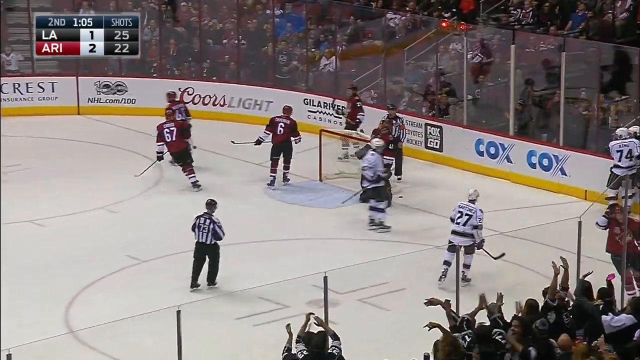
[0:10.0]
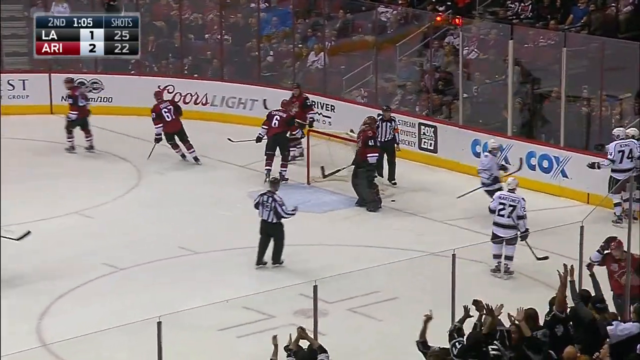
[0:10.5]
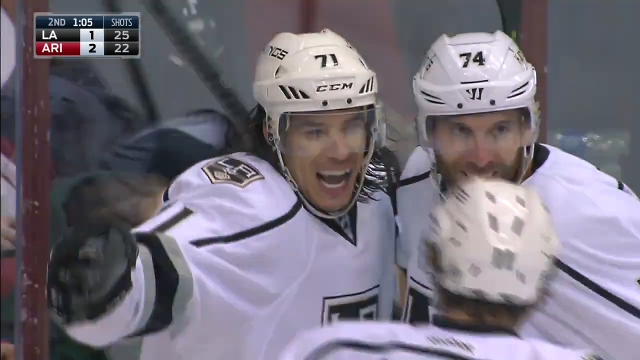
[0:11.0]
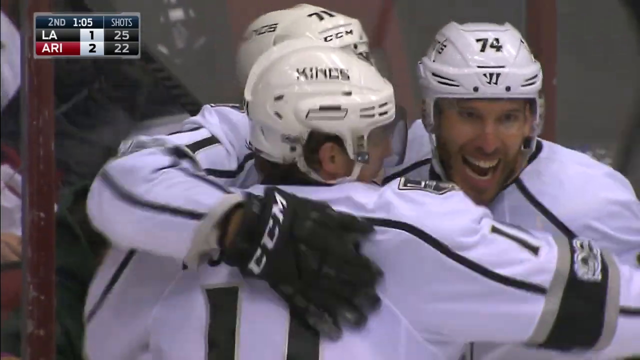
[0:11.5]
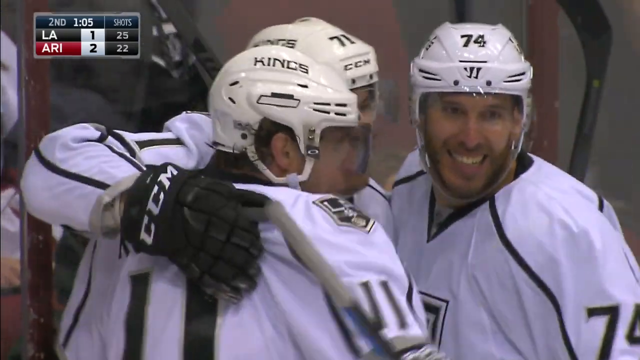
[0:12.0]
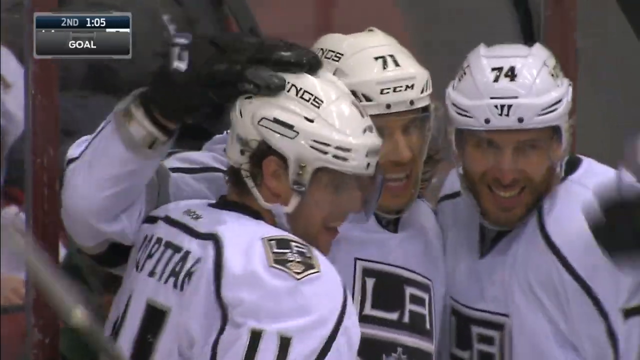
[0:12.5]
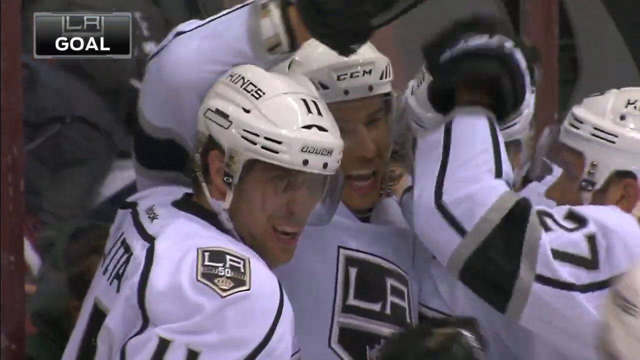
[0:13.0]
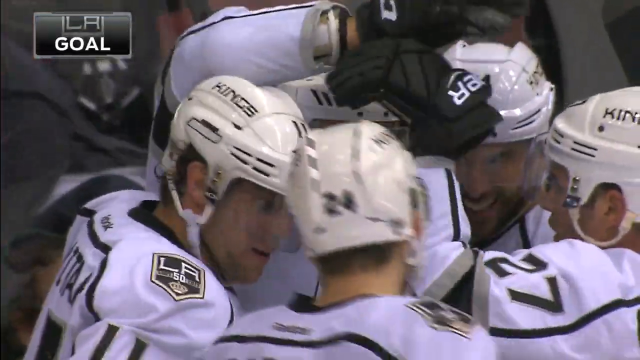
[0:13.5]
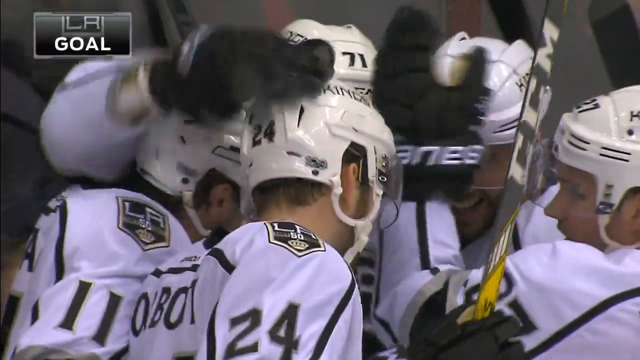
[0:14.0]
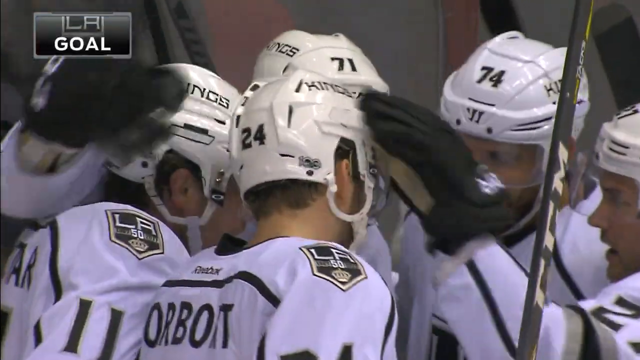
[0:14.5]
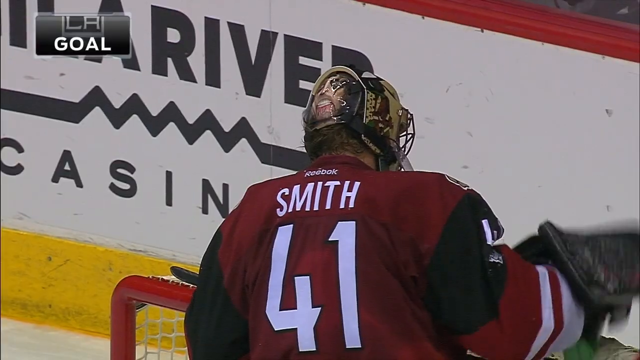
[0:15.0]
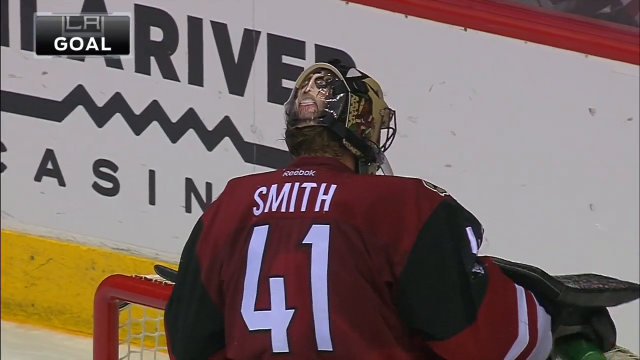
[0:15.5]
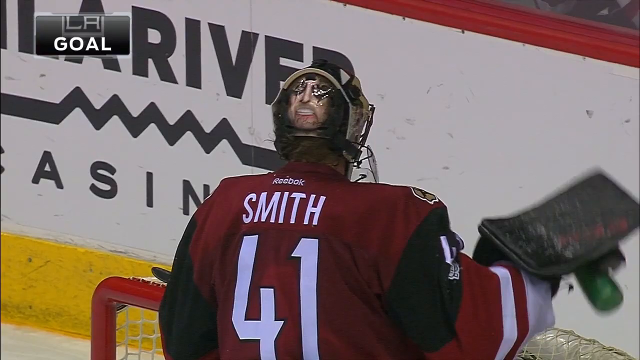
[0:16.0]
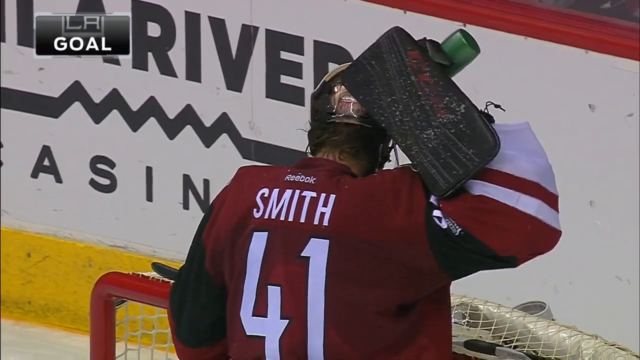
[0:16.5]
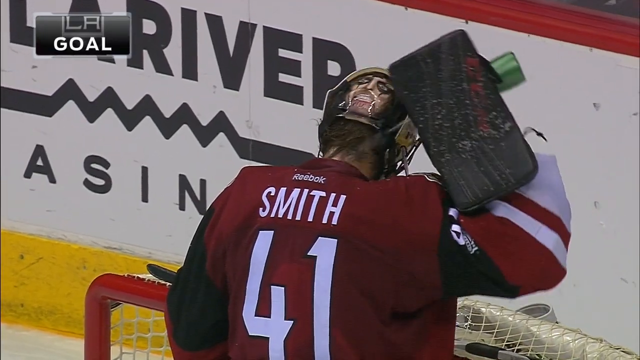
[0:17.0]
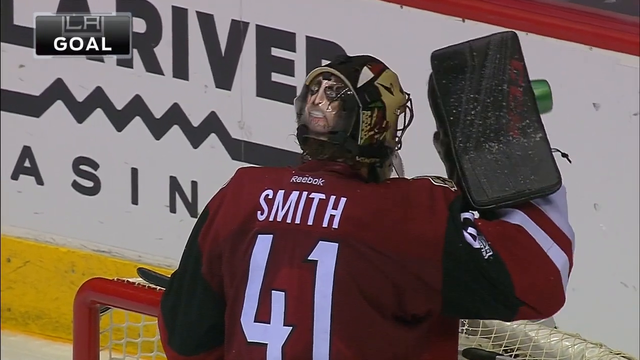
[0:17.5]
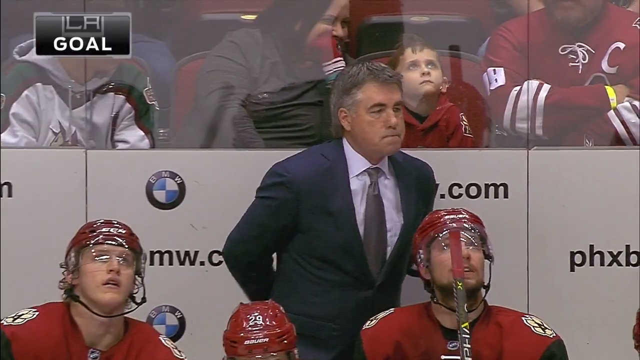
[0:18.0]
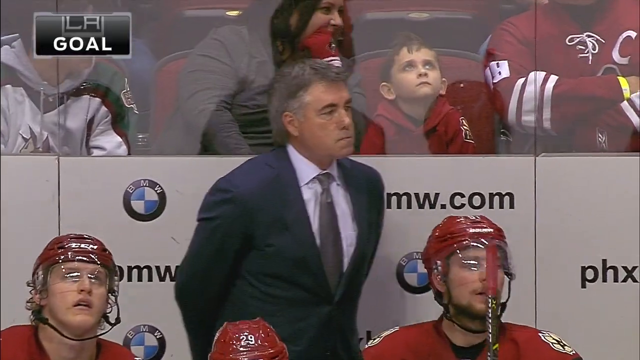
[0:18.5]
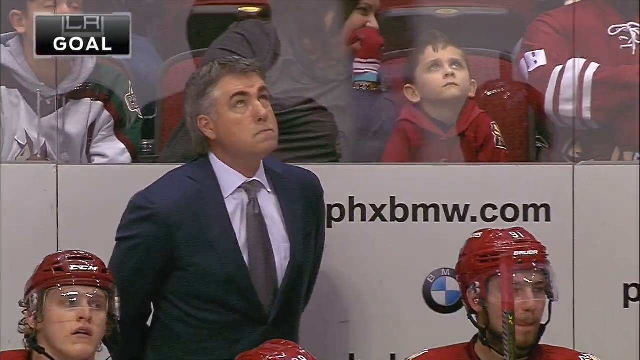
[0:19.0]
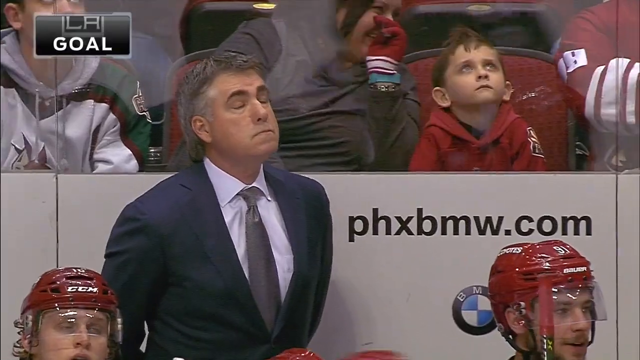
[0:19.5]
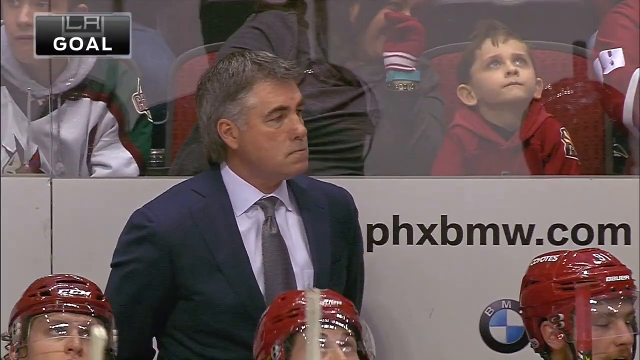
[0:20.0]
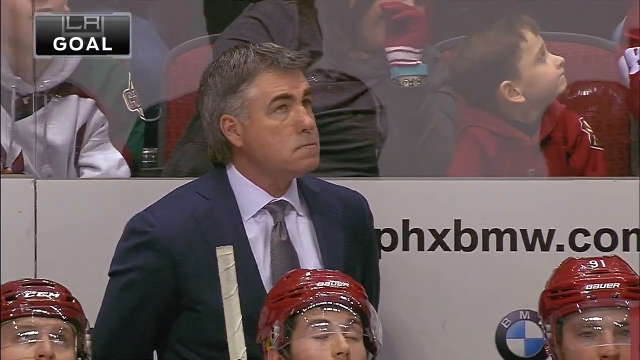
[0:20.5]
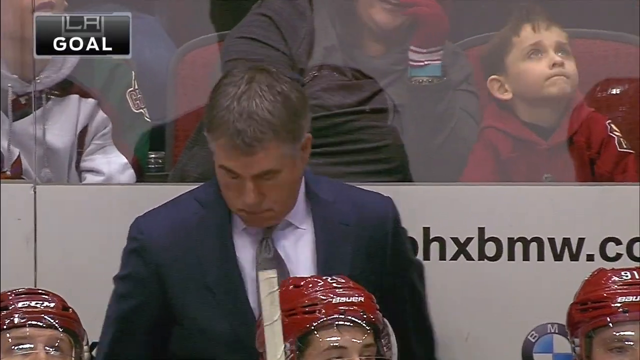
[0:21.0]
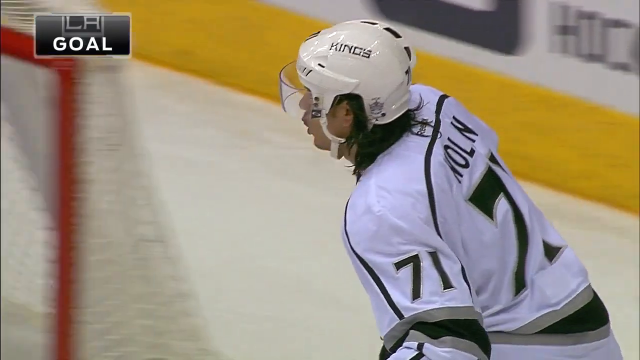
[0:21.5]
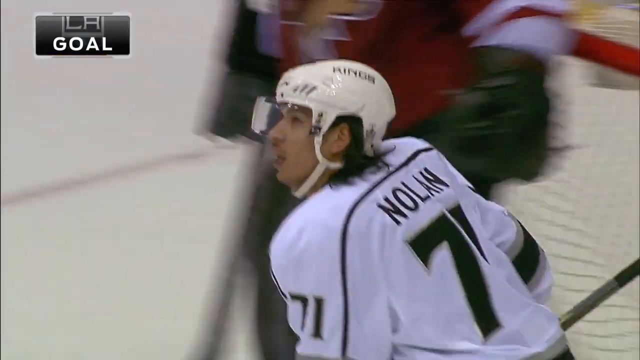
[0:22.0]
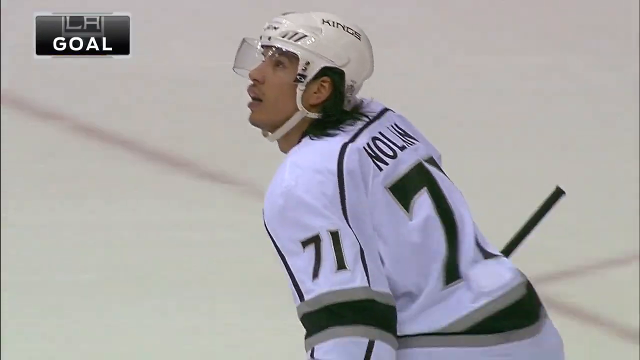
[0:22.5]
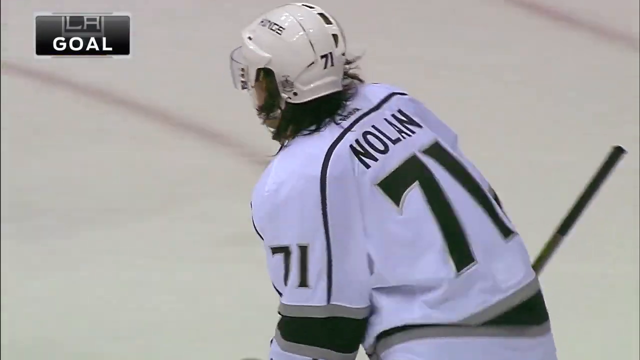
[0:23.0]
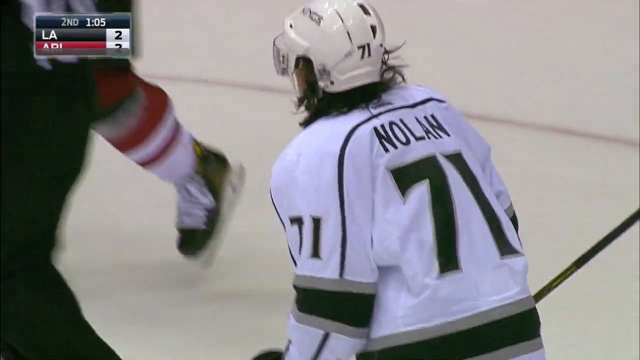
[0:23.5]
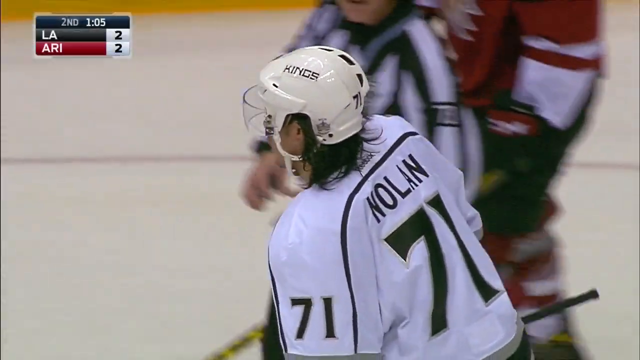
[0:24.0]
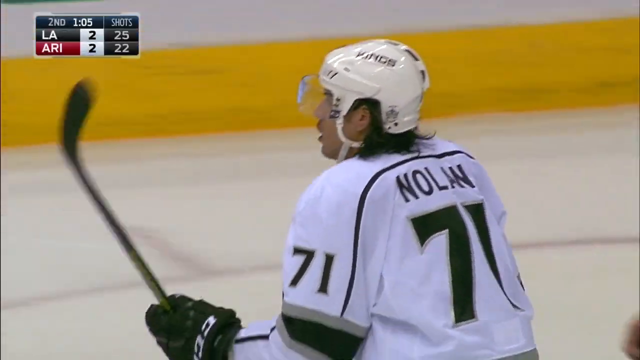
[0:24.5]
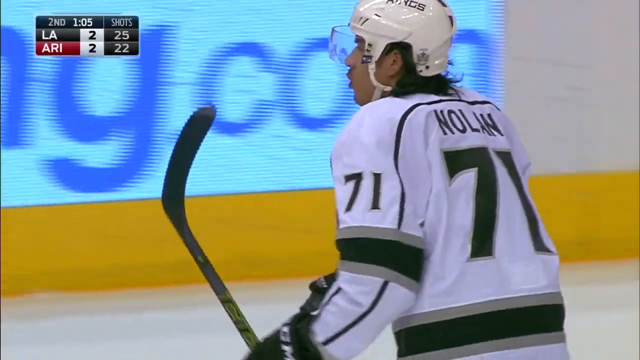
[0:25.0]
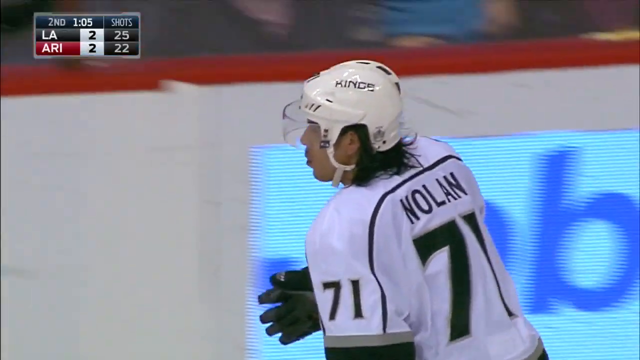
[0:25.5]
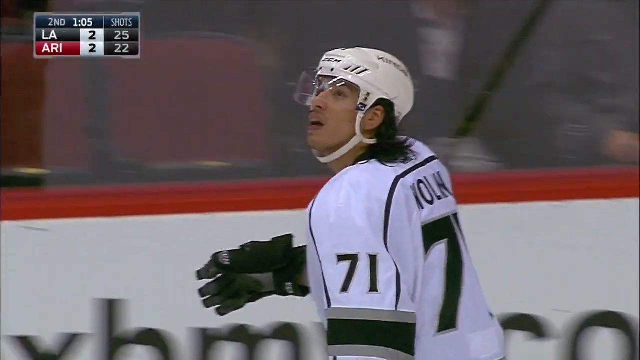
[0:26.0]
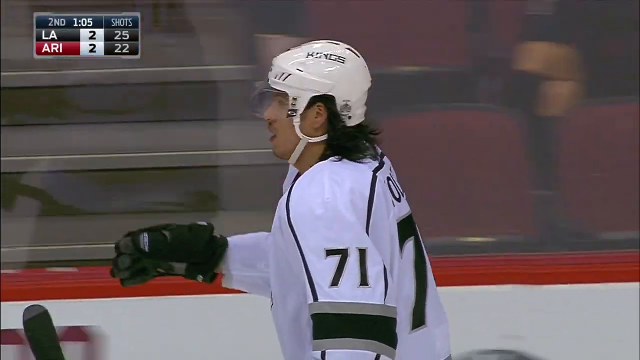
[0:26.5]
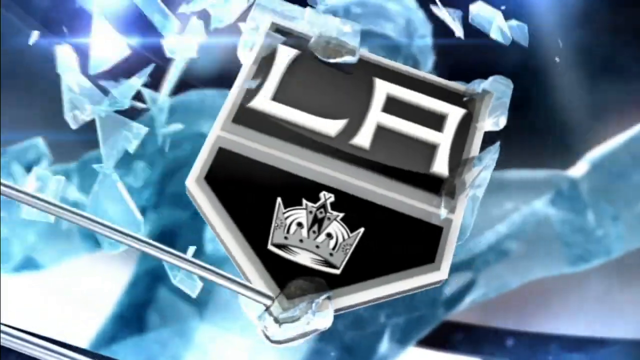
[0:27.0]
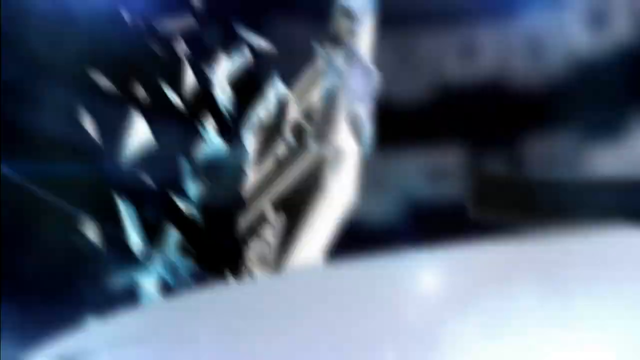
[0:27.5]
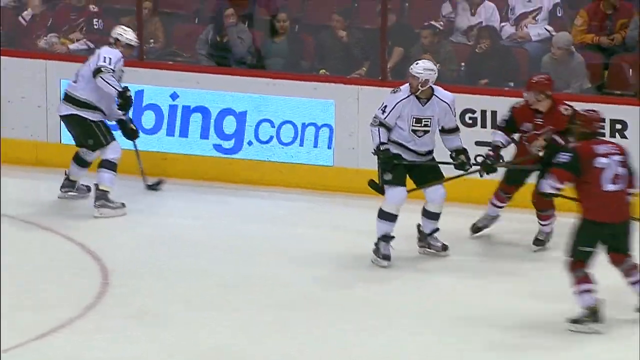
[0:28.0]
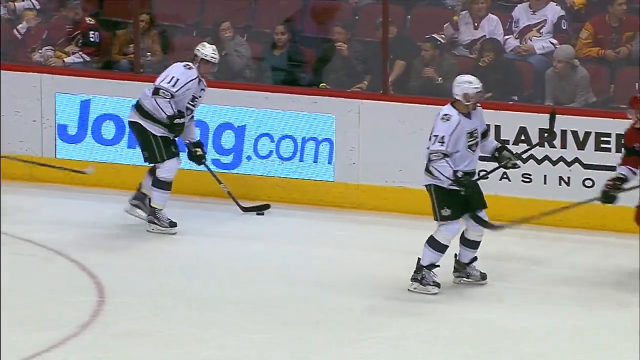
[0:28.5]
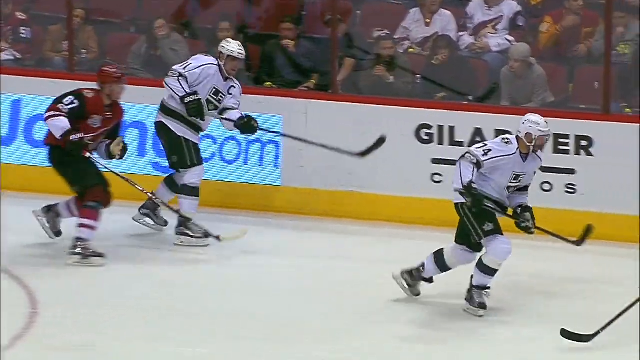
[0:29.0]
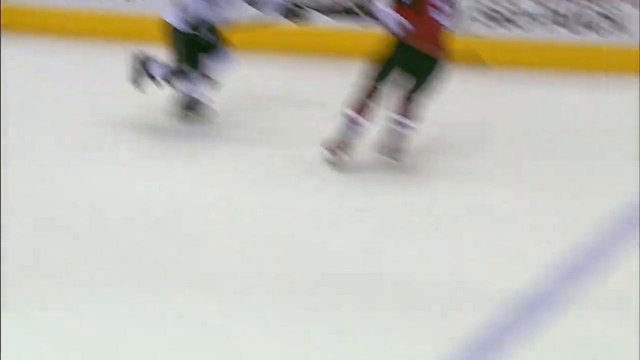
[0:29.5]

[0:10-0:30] The team in white has a happy moment and seems to be celebrating a win. One coach is not happy, apparently the coach of the red team or someone supporting the red team. The red team's side is sad and seems very devastated and annoyed, while the winners are very happy. A guy has water pouring on his back. After a few seconds of celebration, the players go back to the game and start playing again.